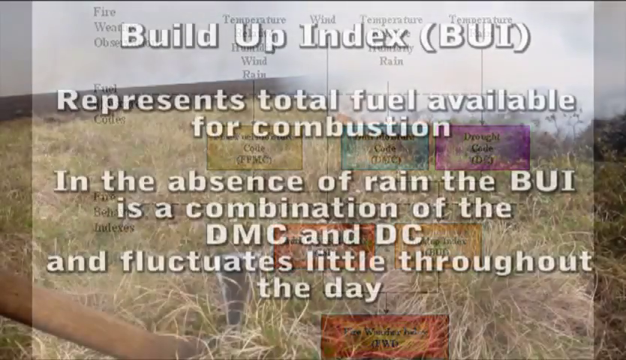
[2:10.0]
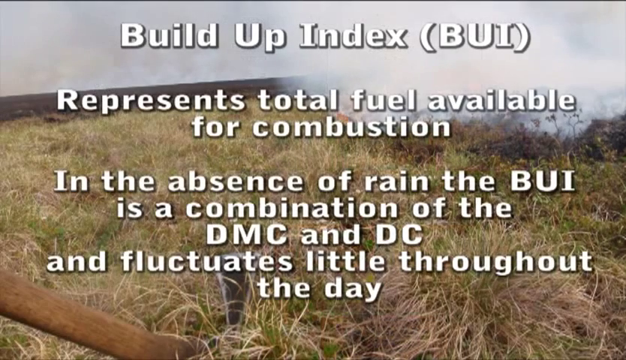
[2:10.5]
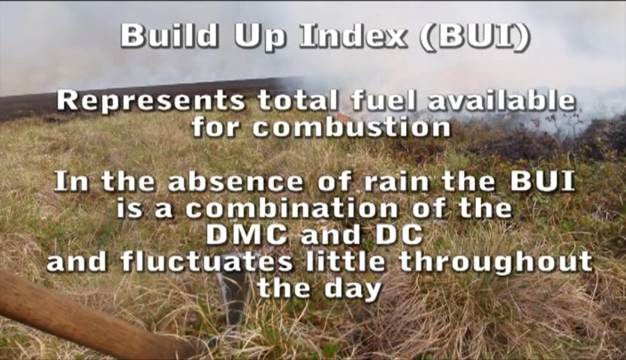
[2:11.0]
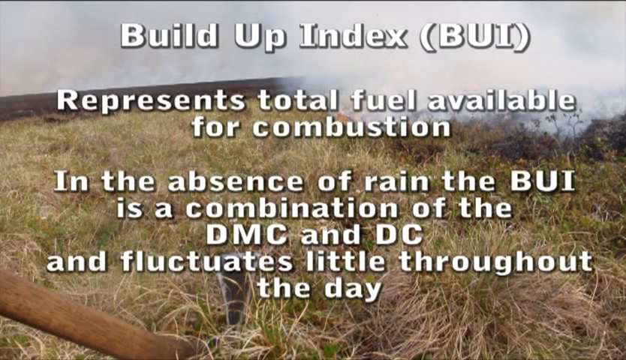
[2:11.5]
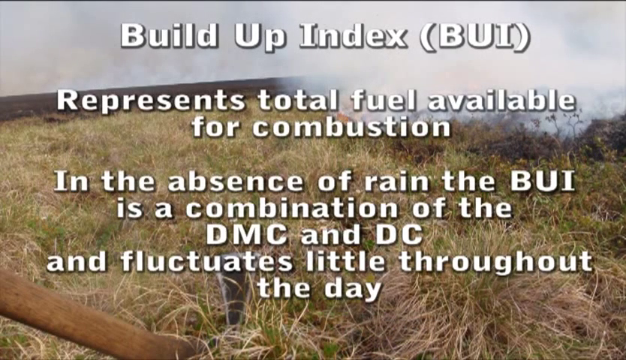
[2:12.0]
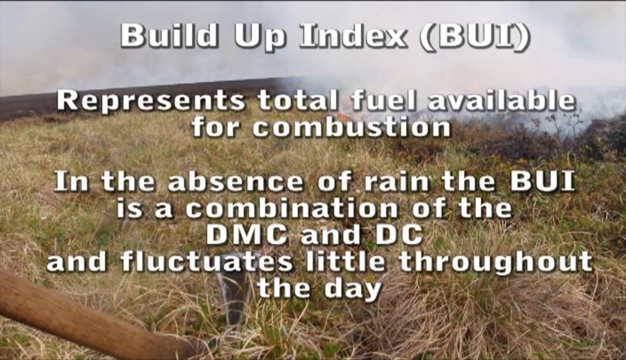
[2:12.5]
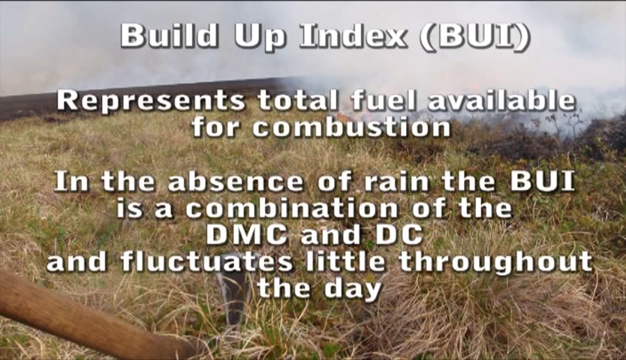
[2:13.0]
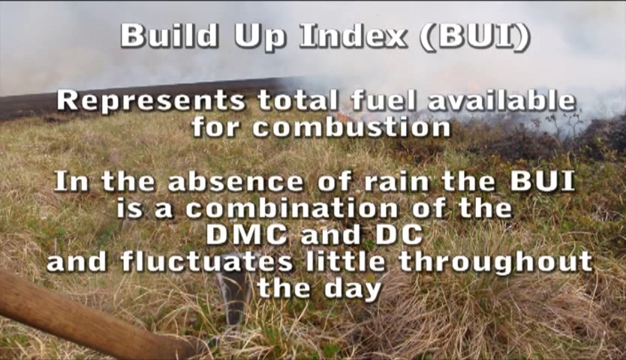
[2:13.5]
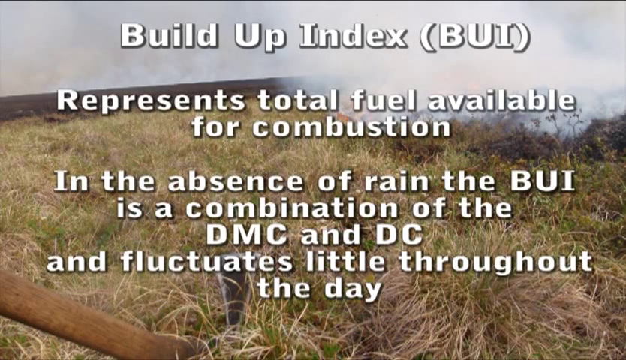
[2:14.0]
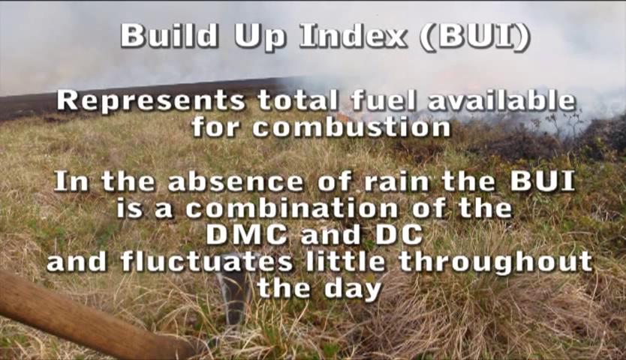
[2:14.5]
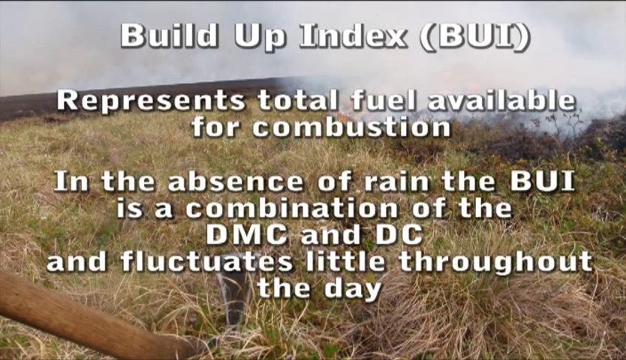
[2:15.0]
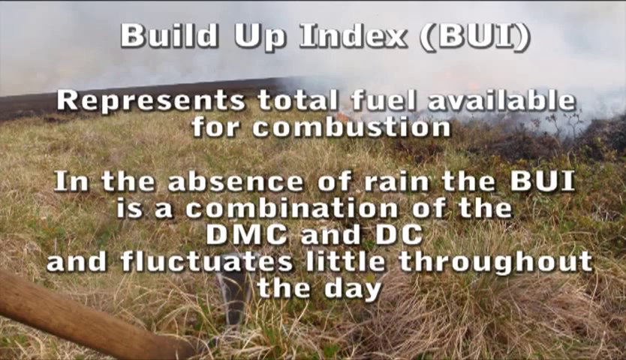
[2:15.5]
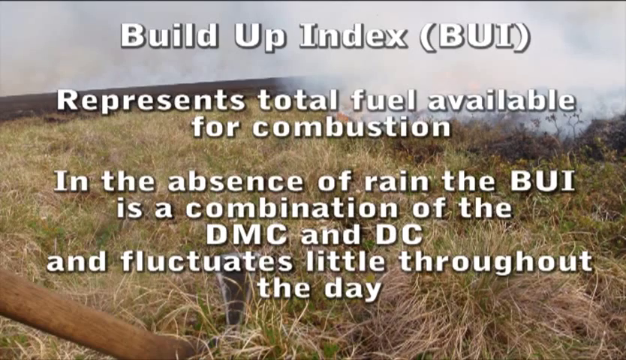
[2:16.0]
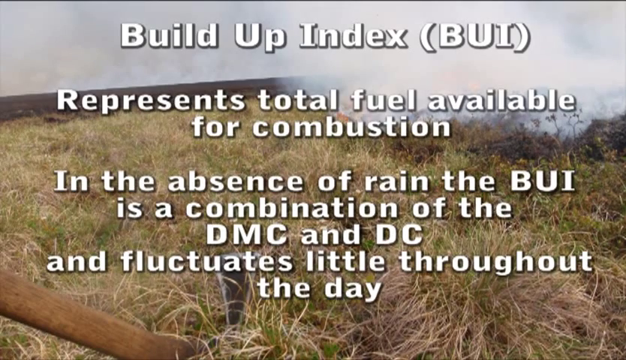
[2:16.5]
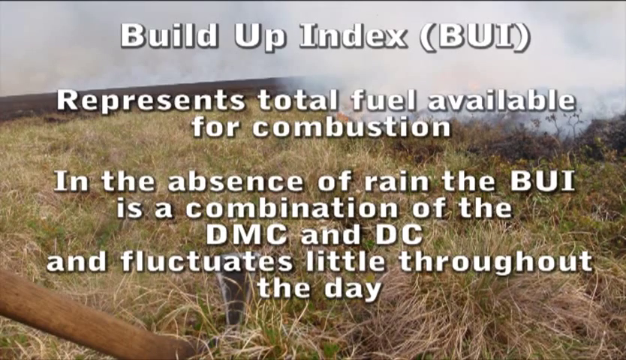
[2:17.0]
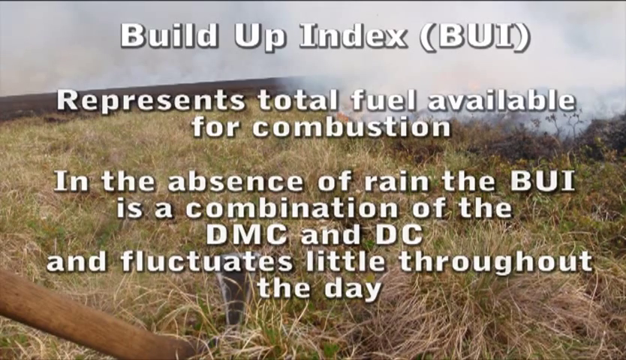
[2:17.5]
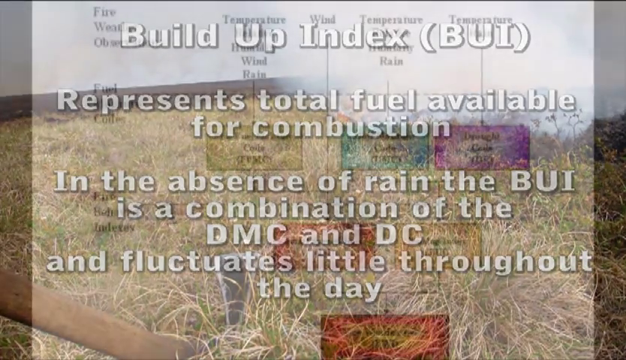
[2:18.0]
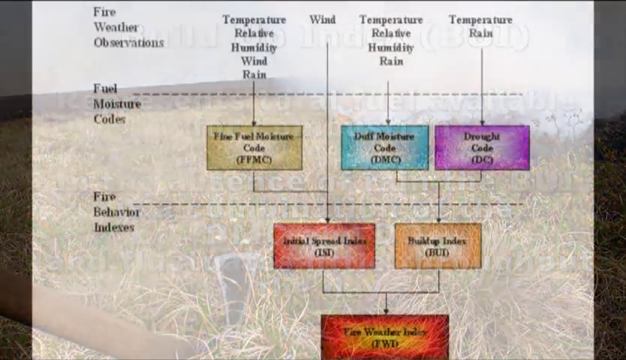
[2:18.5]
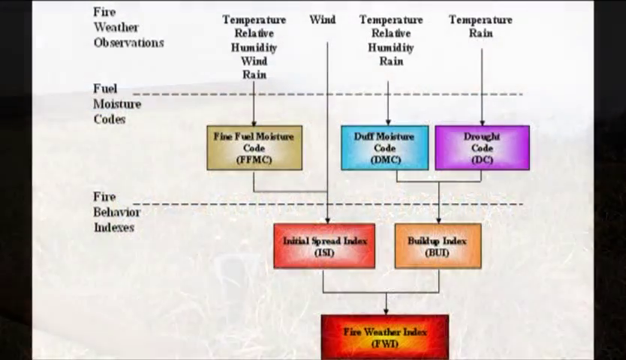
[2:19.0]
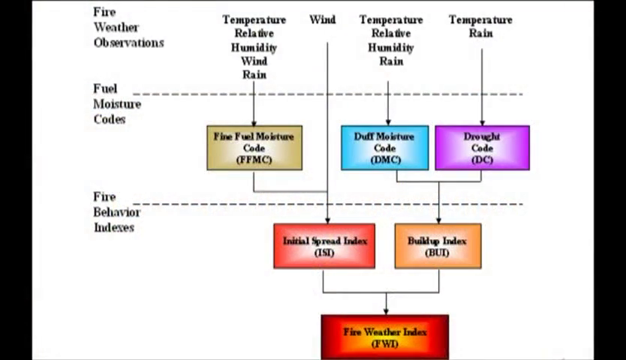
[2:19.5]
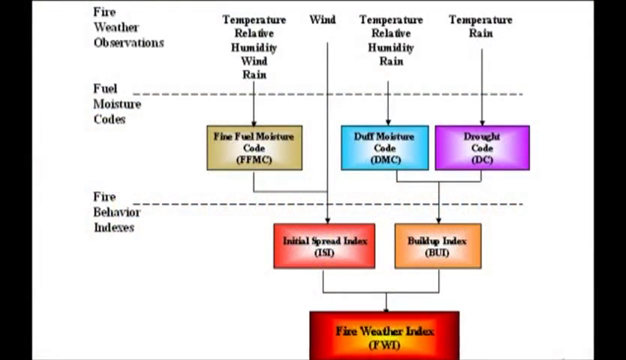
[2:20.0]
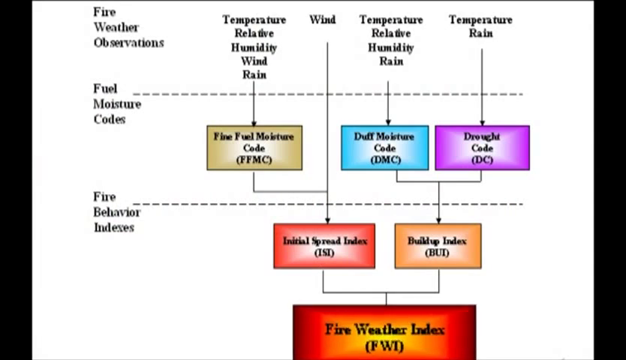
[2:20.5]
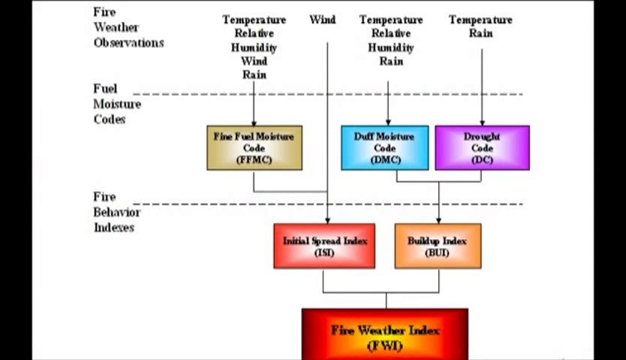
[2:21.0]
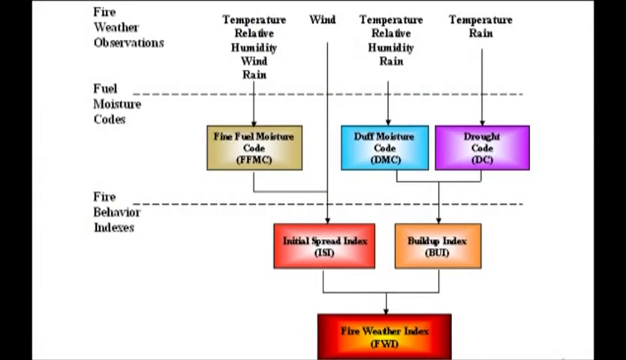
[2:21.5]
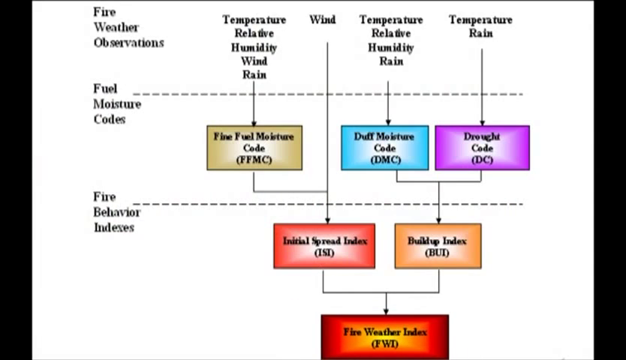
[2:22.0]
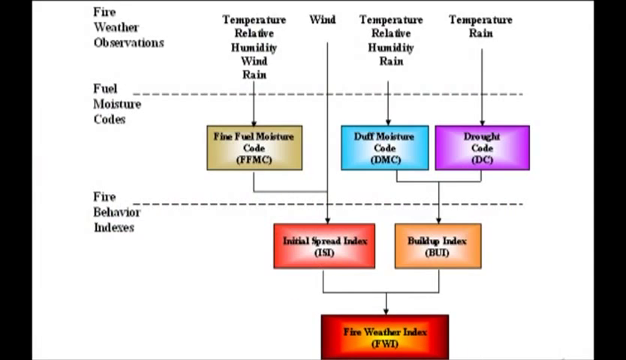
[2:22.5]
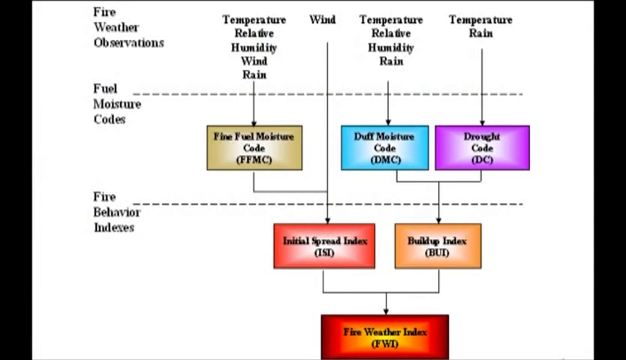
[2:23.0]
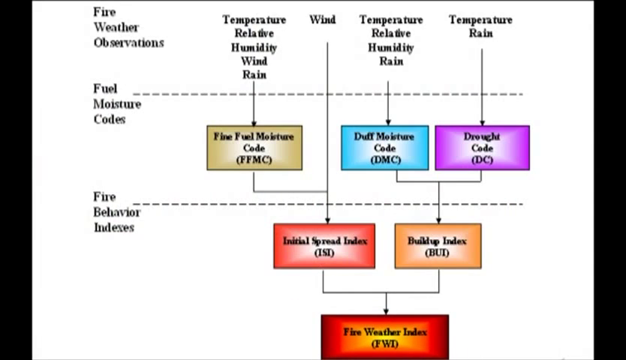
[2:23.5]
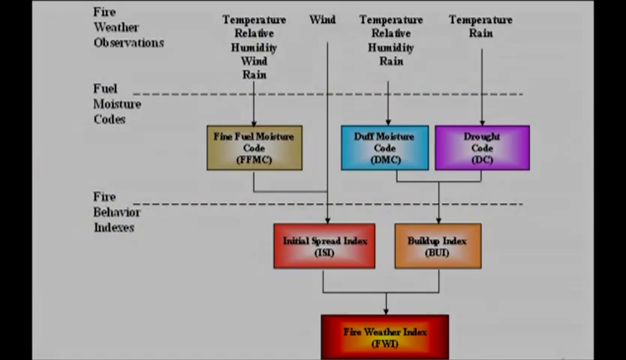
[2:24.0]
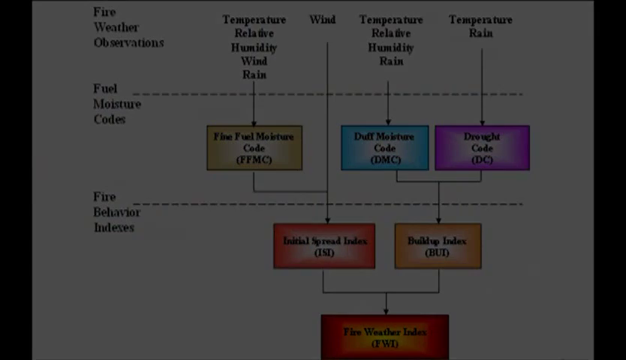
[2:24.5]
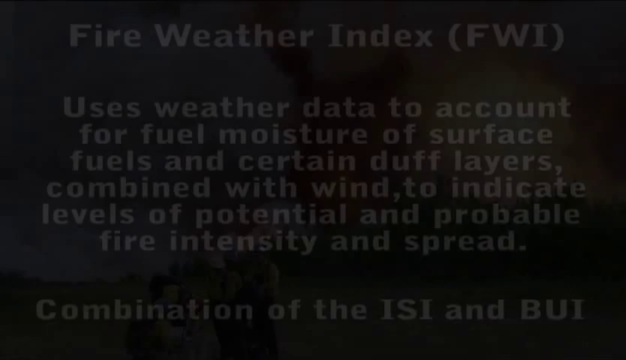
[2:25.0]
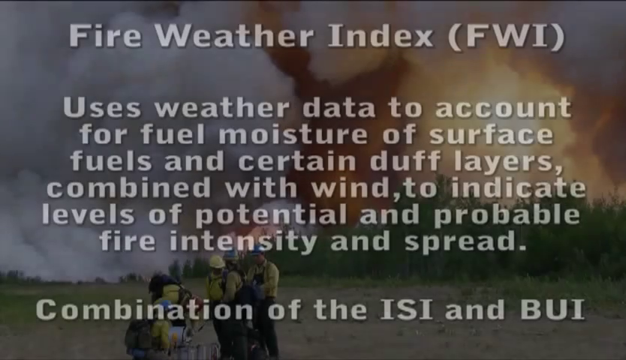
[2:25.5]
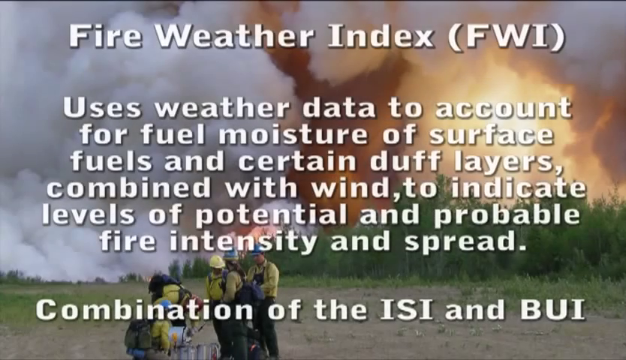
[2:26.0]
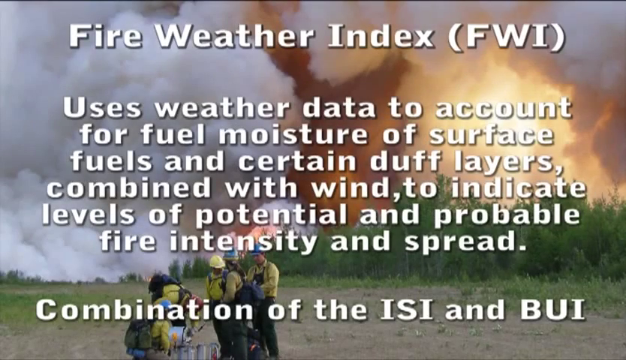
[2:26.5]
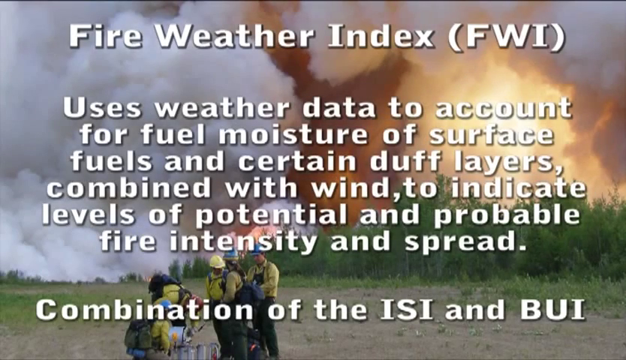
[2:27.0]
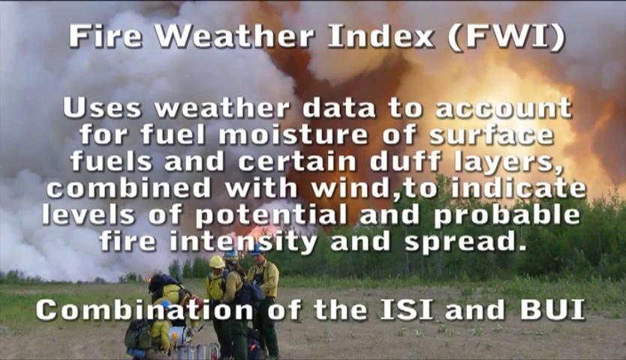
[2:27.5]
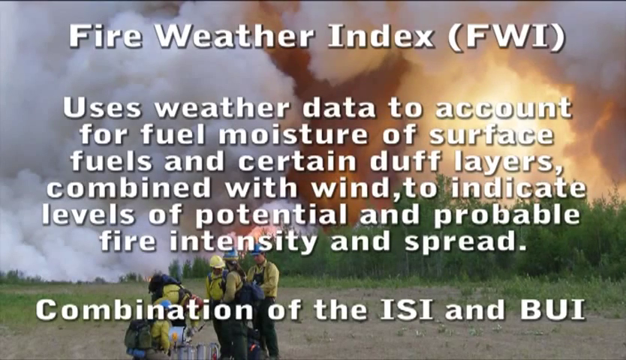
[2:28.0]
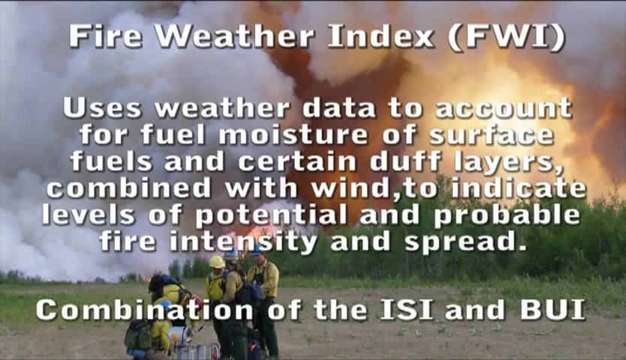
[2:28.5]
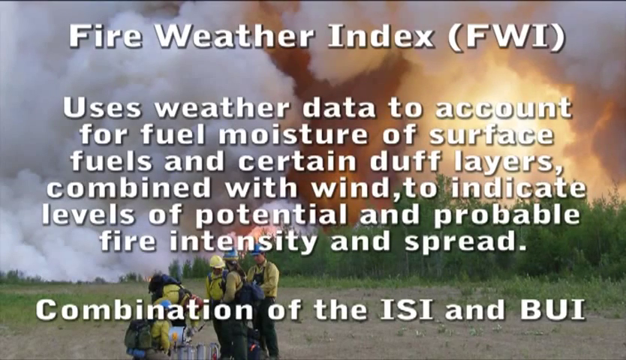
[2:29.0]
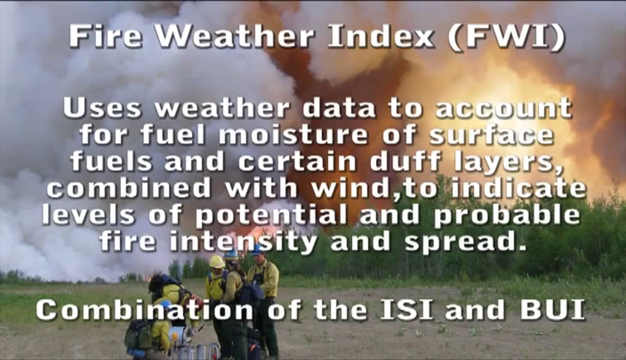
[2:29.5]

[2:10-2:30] White letters, from top to bottom, read "build up index (BUI)," then "represents total fuel available for combustion," and then "in the absence of rain, the BUI is a combination of the DMC and DC and fluctuates little throughout the day." Something is rising up with fire, presumably coming toward the patch seen in the foreground. The scene then moves to the color-coded box chart: three boxes in the middle of the screen, two boxes underneath them, and one underneath those, each corresponding to items such as temperature, relative humidity, wind and rain.